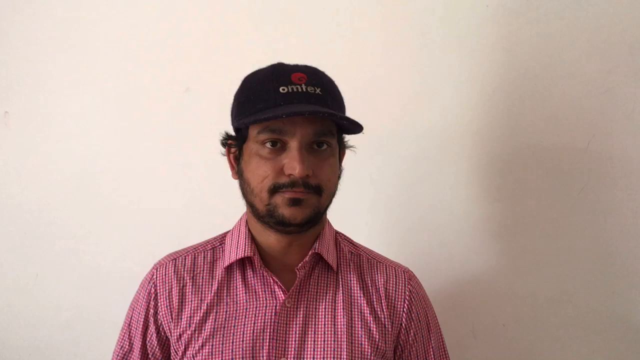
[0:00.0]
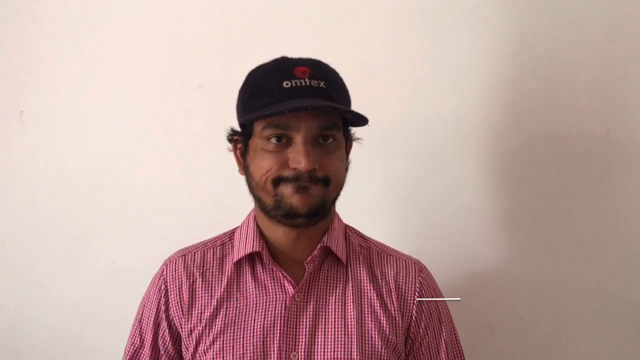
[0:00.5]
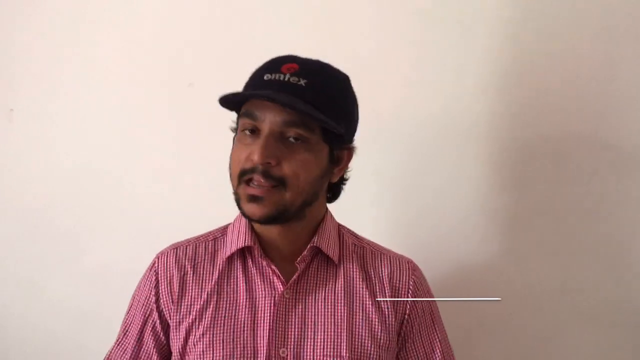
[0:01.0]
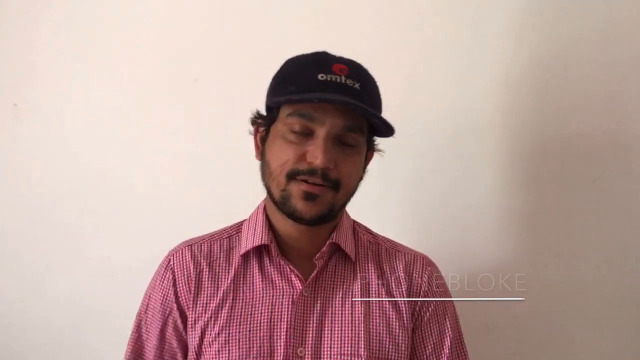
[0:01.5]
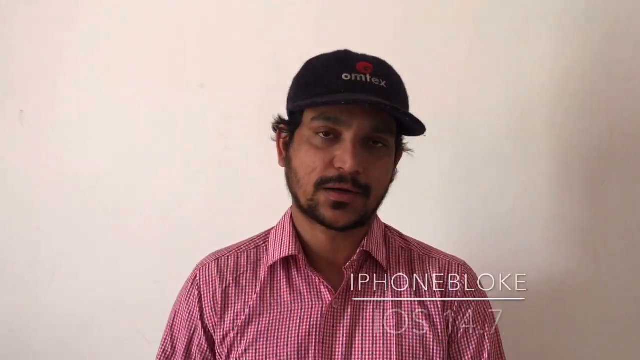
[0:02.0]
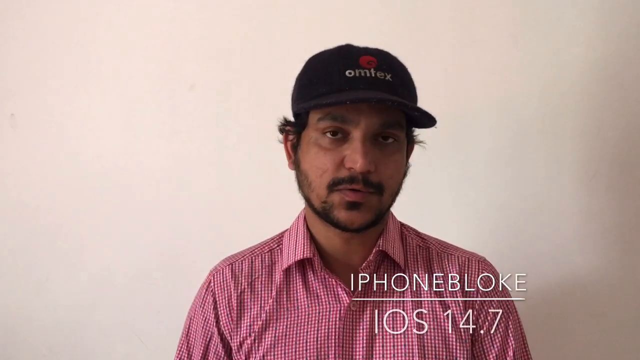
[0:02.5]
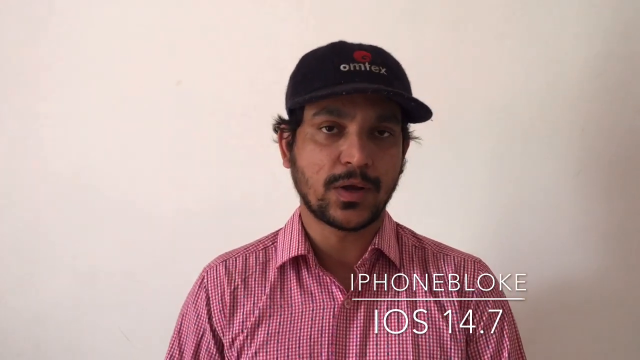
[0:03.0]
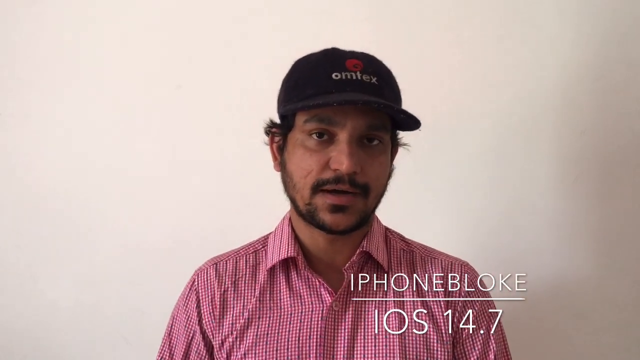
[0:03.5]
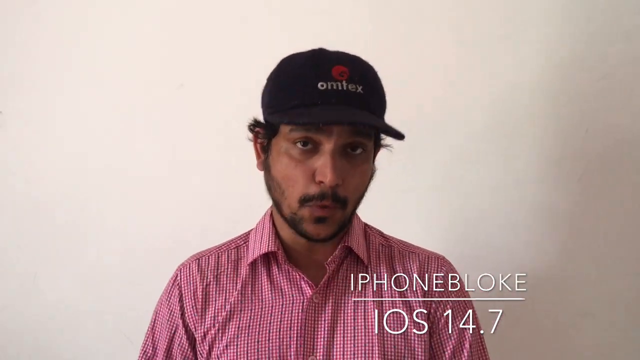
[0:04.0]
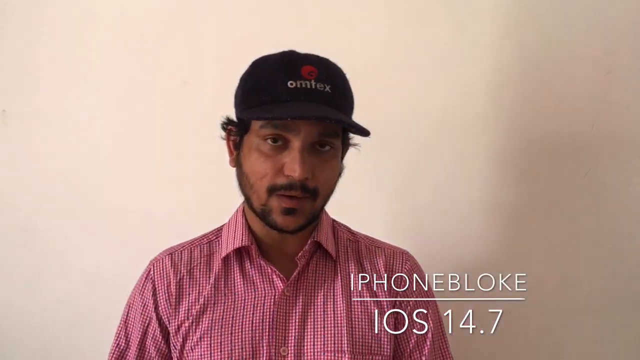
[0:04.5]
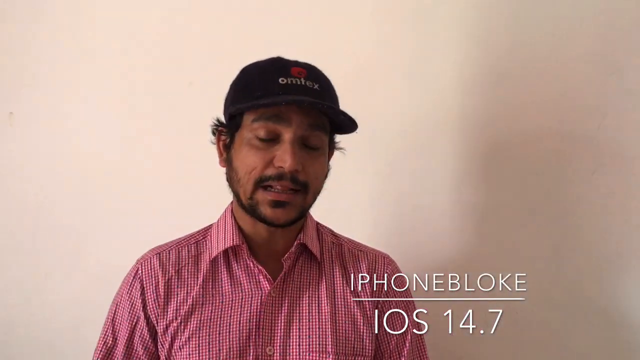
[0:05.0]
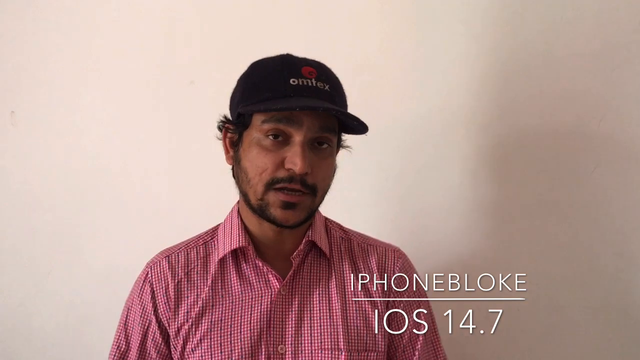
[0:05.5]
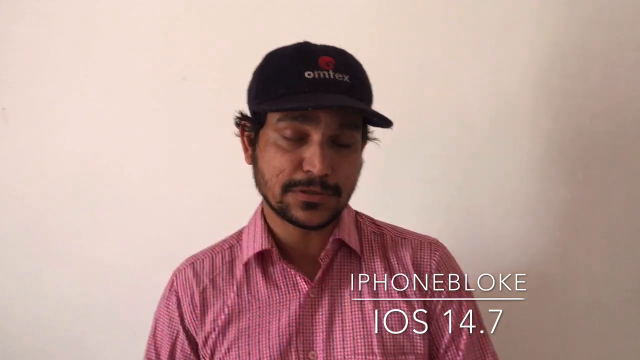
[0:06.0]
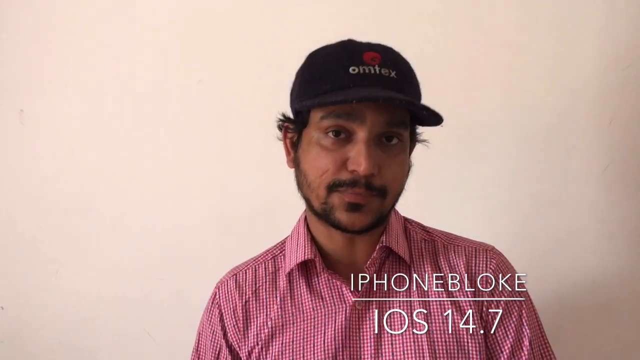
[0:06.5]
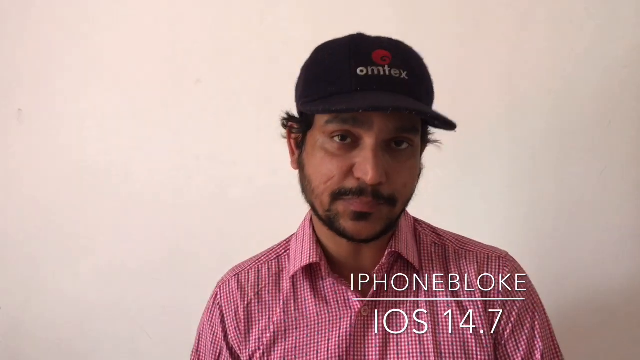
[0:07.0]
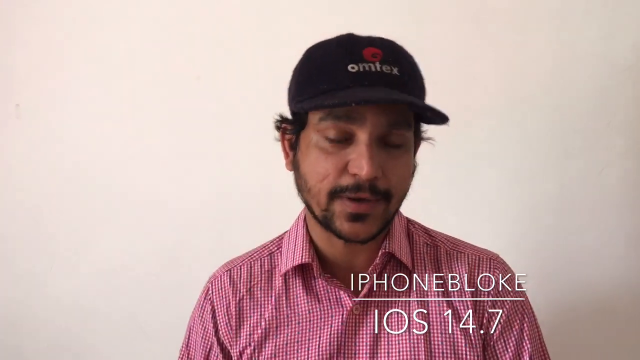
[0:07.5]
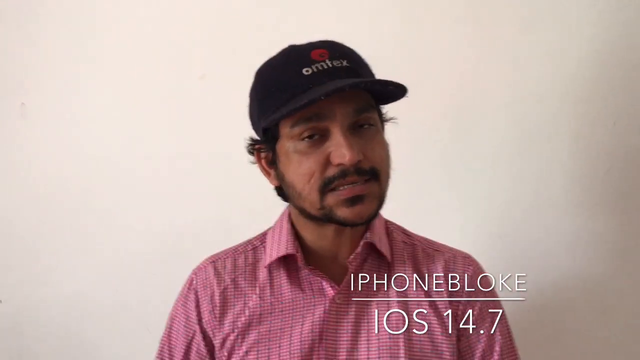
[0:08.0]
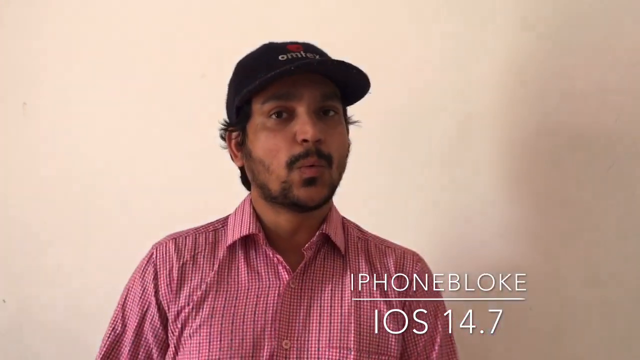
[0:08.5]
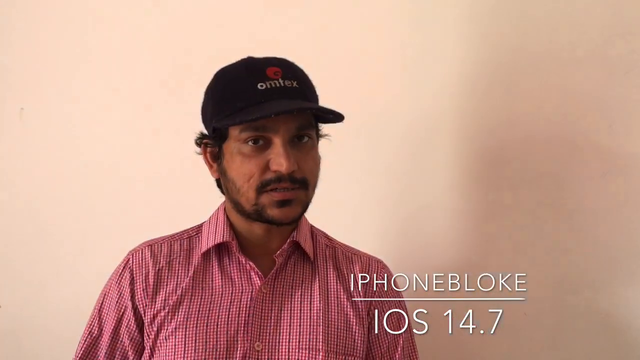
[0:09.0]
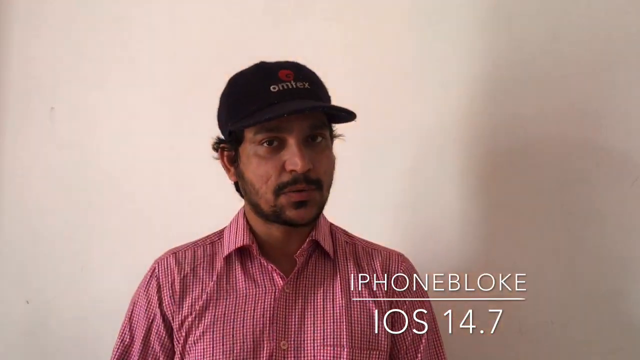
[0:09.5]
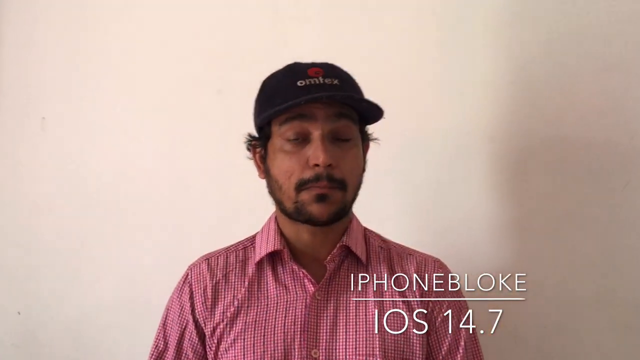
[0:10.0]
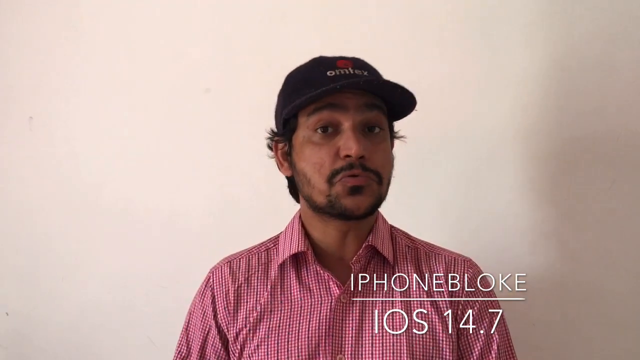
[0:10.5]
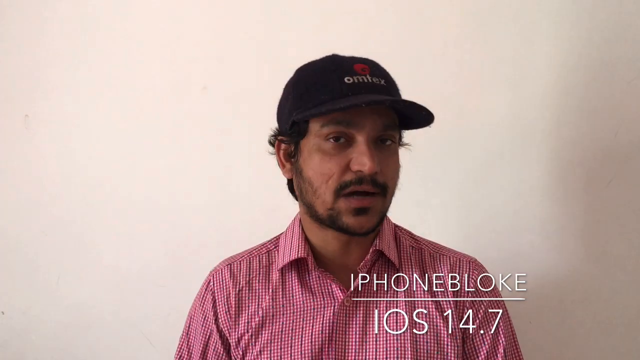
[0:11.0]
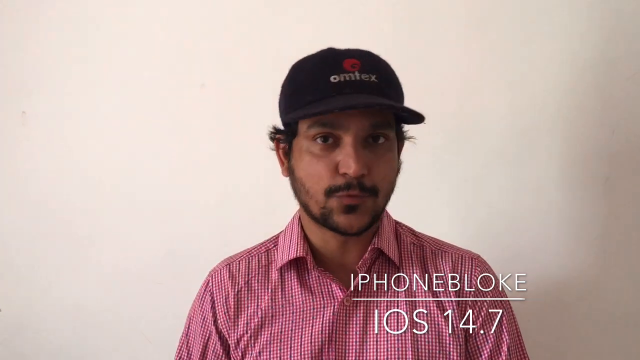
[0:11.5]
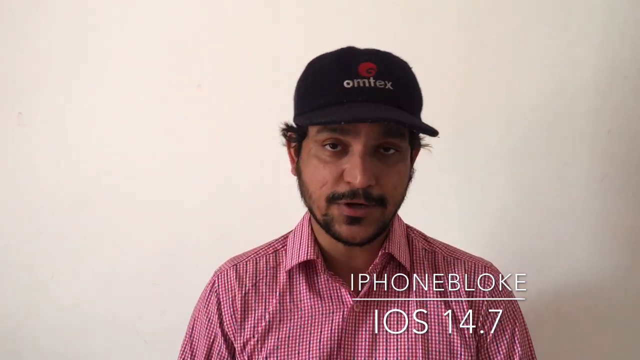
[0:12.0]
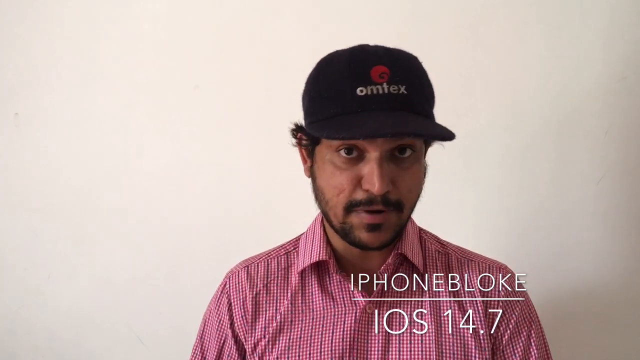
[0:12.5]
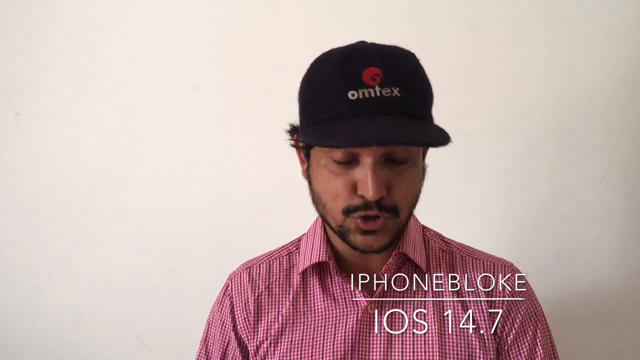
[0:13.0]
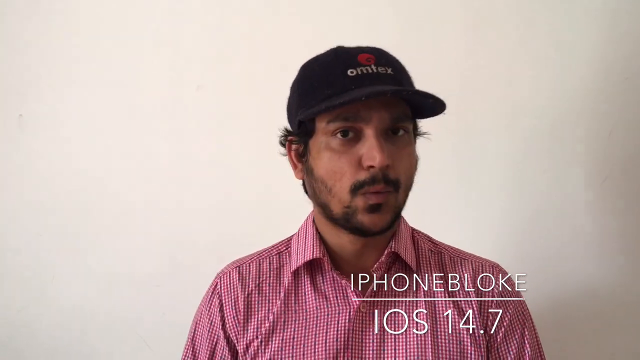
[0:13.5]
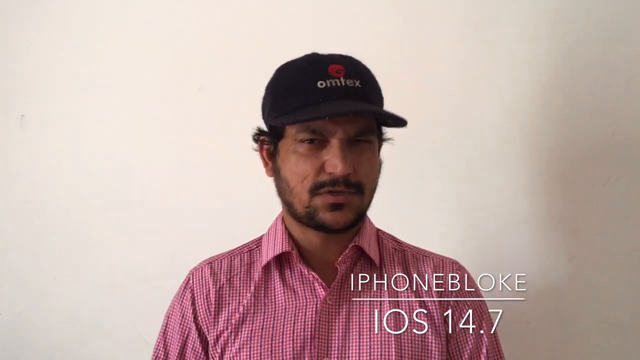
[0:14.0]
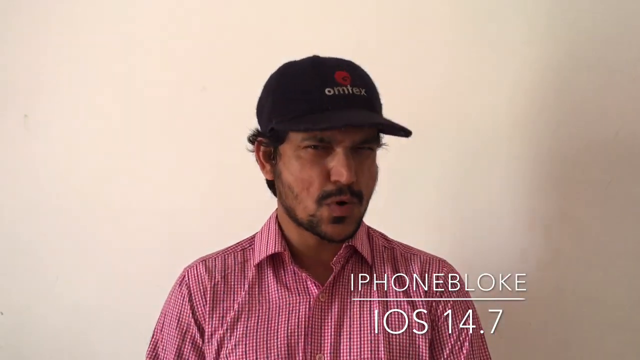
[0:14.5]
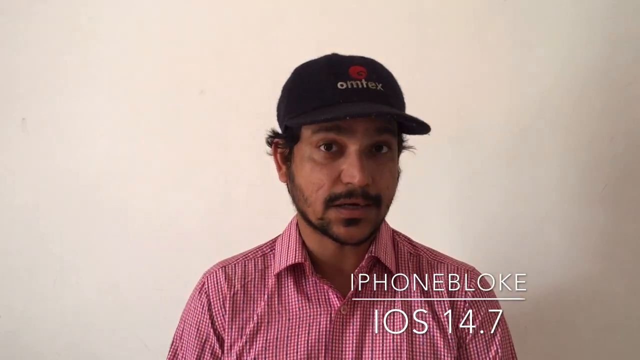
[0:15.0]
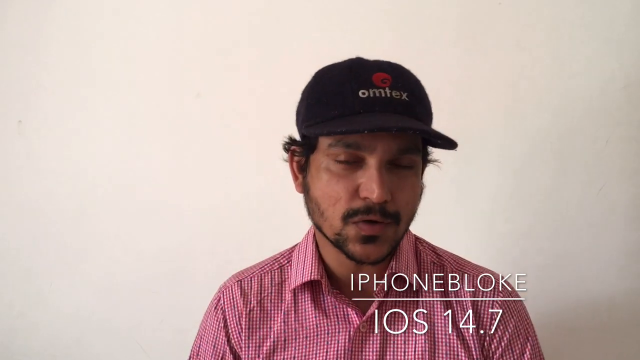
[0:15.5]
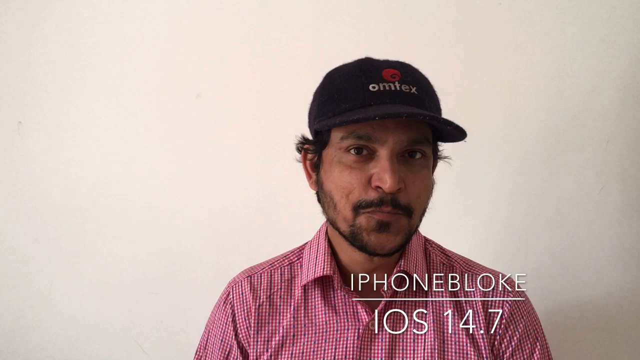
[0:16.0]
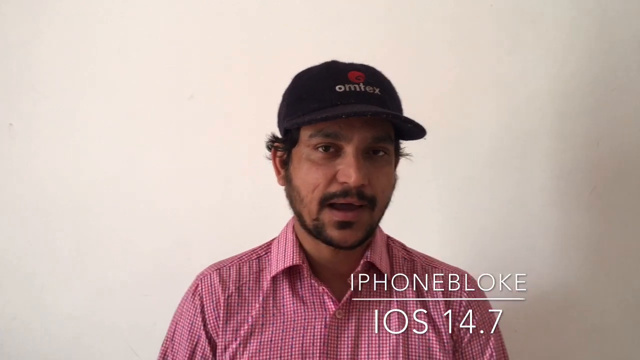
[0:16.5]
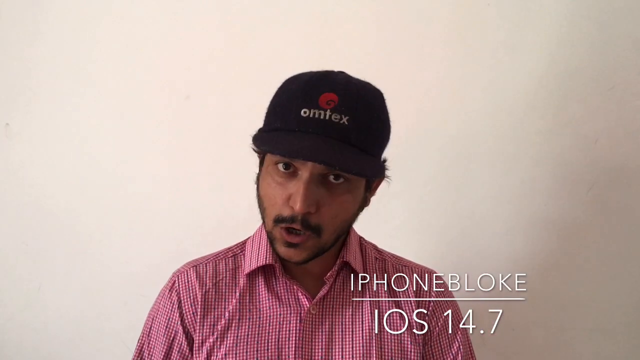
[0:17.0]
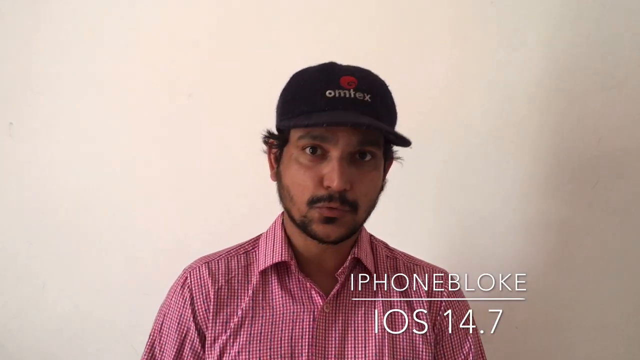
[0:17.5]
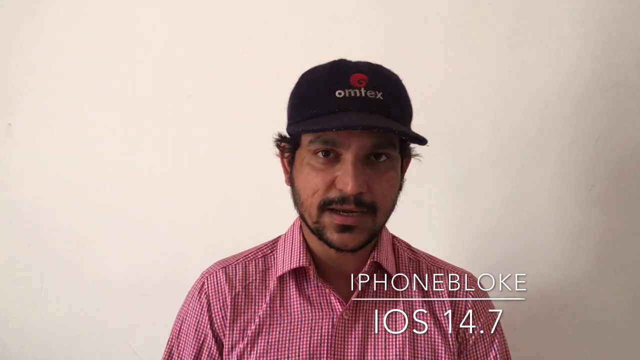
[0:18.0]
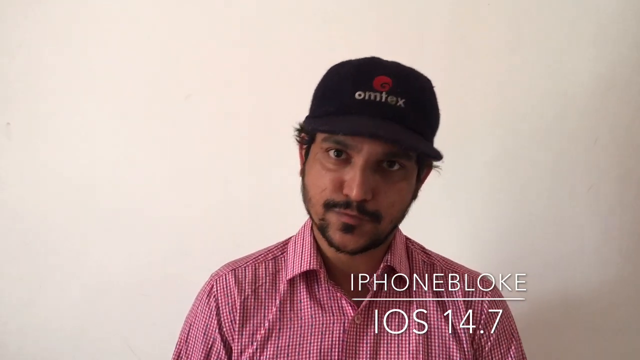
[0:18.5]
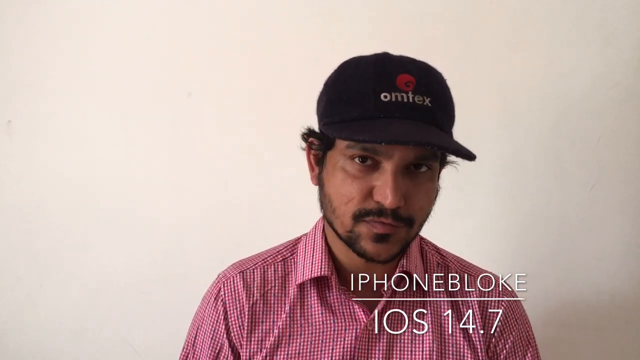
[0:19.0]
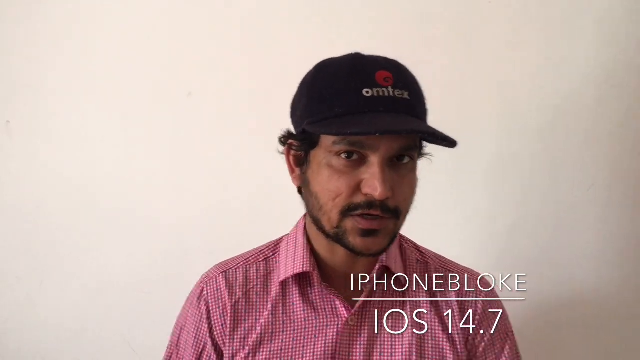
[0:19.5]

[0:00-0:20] A man stands in front of a white wall. He wears a black hat with "Omtex" written on it in white, and above it there is a little red circle. He has dark hair that curves out over his ears, a little beard, a stubble mustache, and a red and white button-up shirt. He kind of smiles, moves his head to the left and tilts it to the right as he talks to the camera. Across the bottom, just right of center, white lettering shows text beginning "iPhone" with a line under it, and "iOS 14.7". A shadow moves a little on the right side of the wall. He kind of rocks forward, then steps back, tilts his head a little to the left and right, opens his eyes wide, tilts his head back, leans his head forward and leans in as he talks, and squints. Sometimes he tilts his head down, his chin going down to the left, as he talks, kind of talking mostly out of the left side of his mouth.